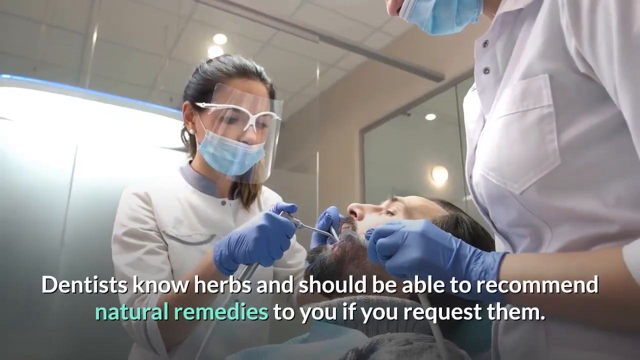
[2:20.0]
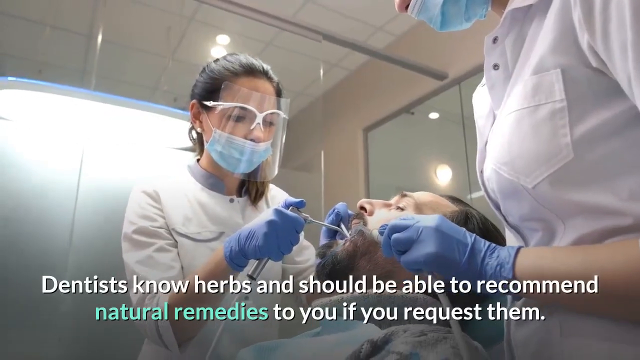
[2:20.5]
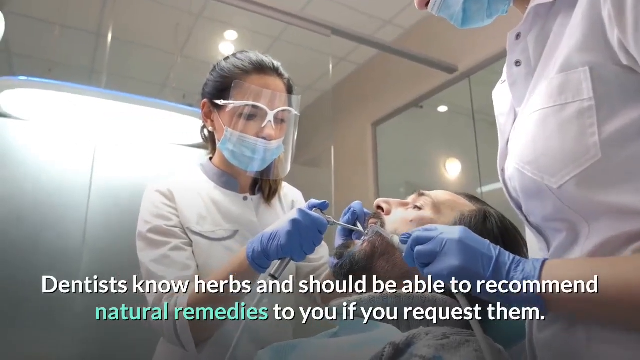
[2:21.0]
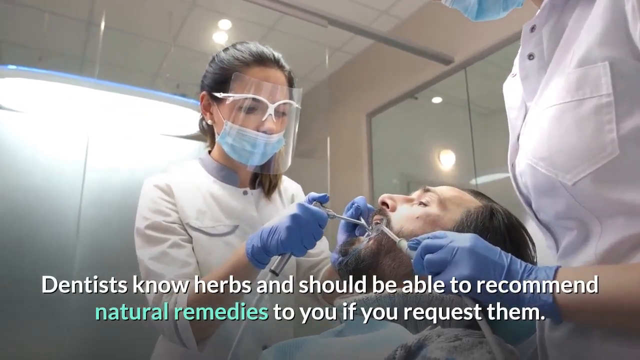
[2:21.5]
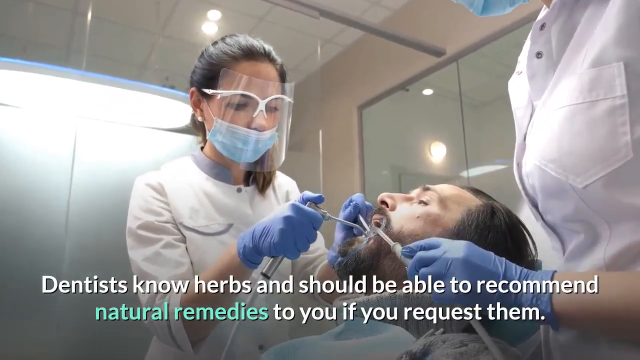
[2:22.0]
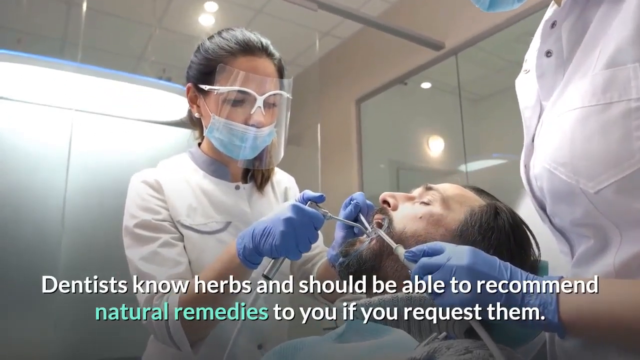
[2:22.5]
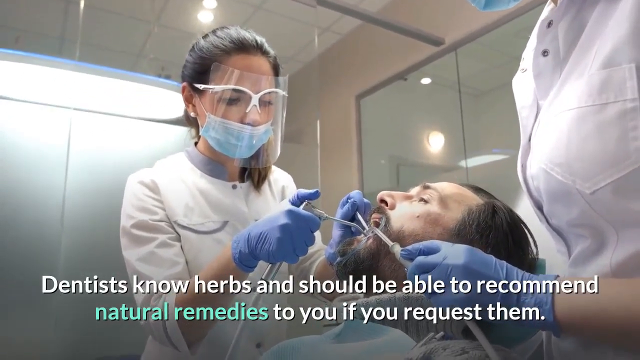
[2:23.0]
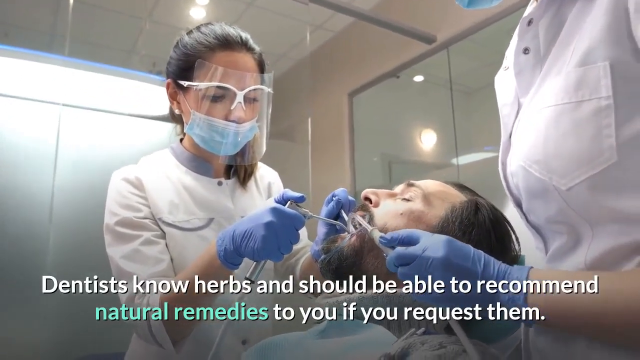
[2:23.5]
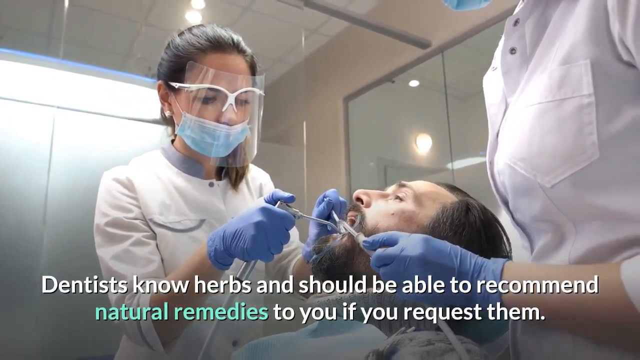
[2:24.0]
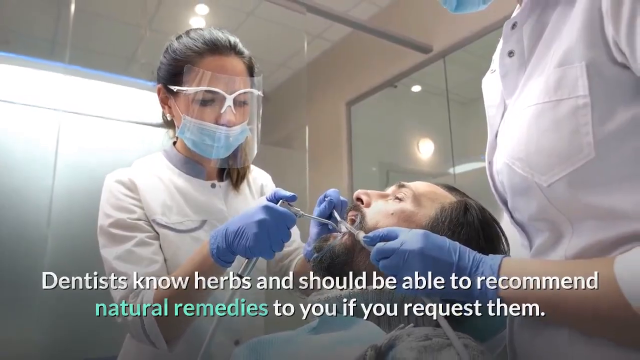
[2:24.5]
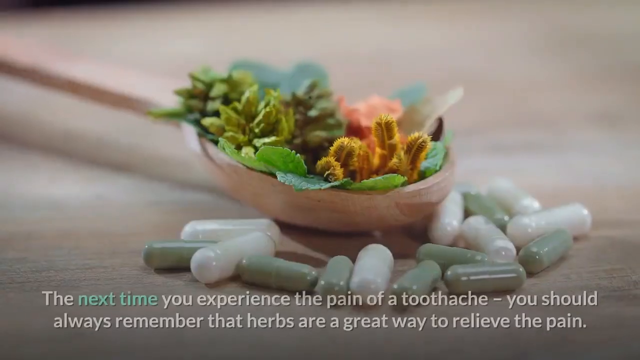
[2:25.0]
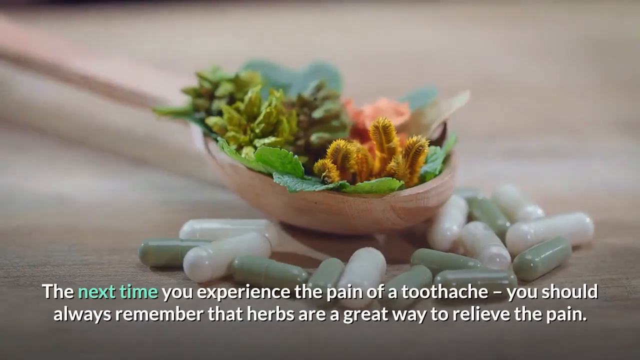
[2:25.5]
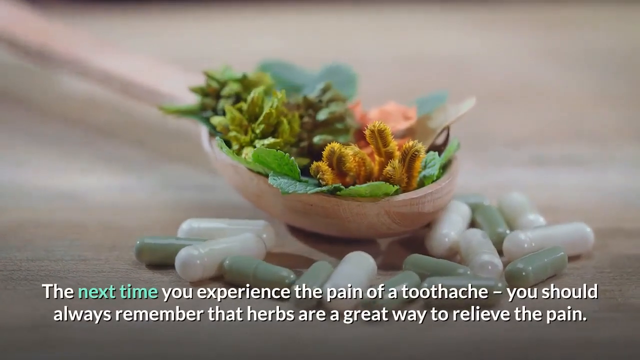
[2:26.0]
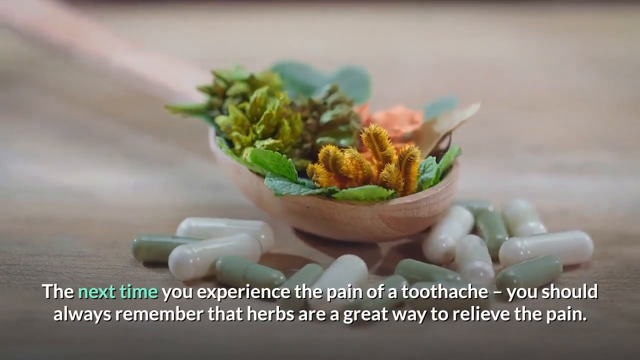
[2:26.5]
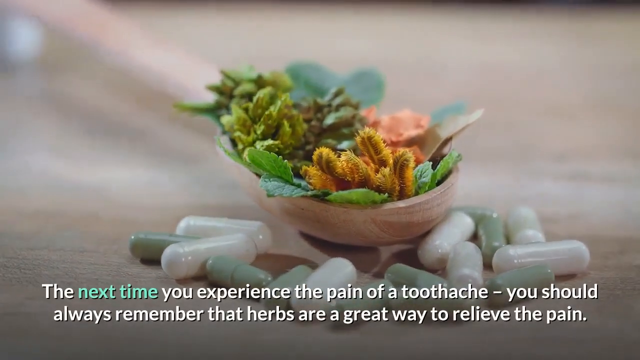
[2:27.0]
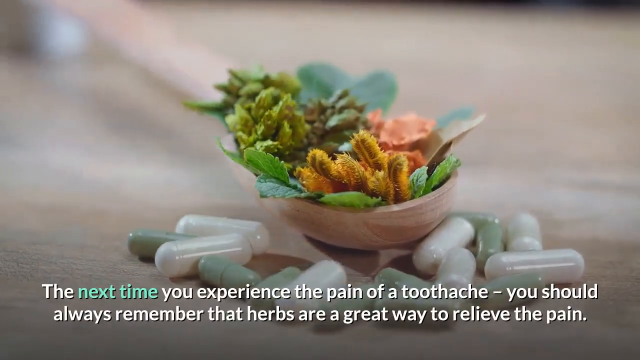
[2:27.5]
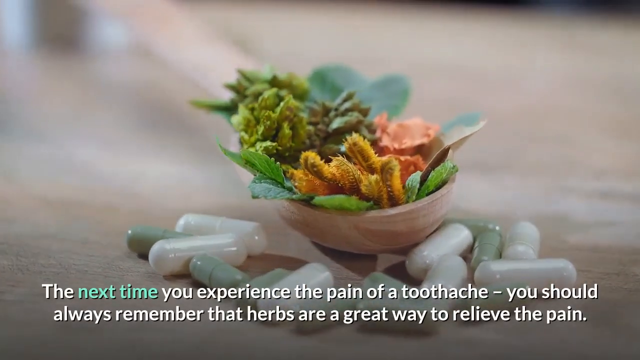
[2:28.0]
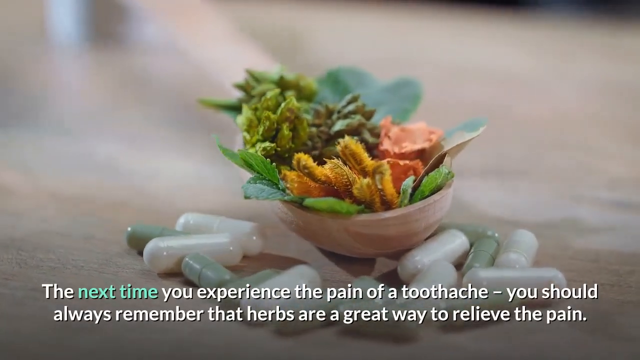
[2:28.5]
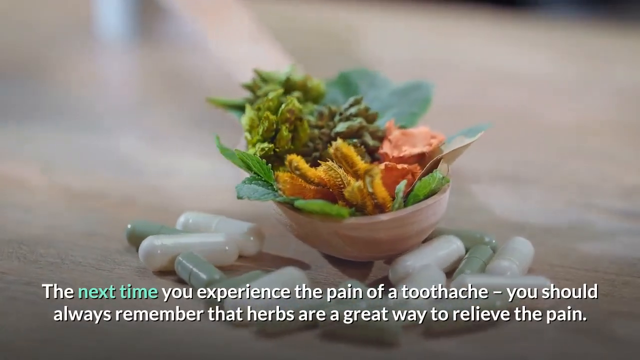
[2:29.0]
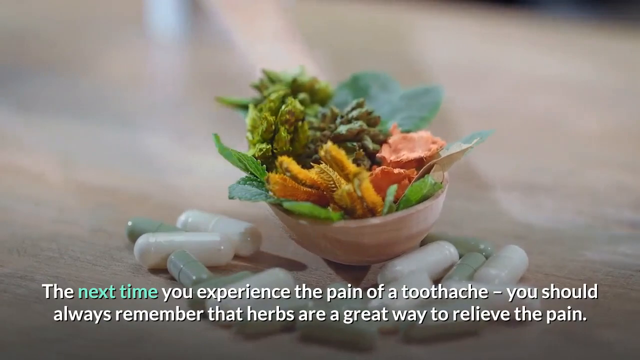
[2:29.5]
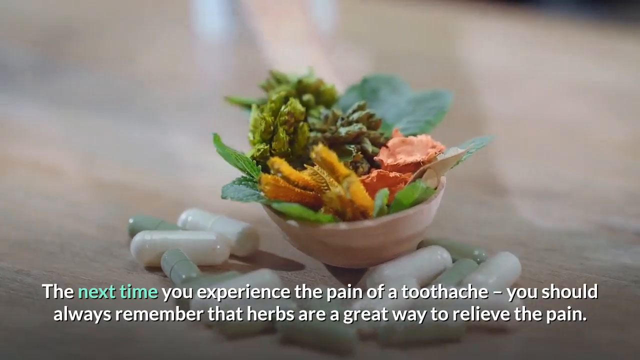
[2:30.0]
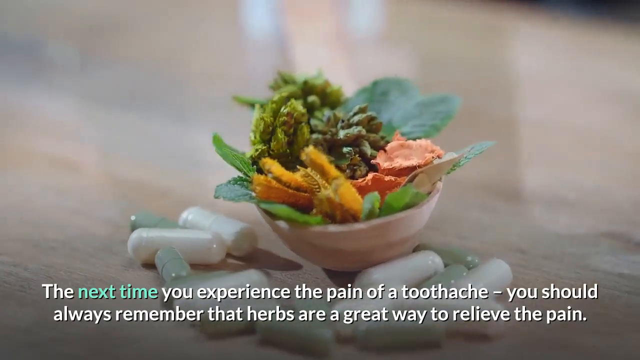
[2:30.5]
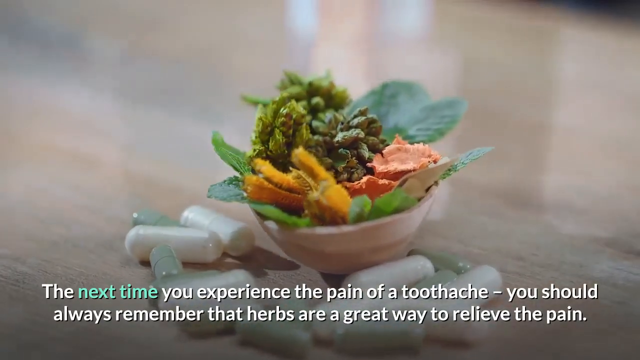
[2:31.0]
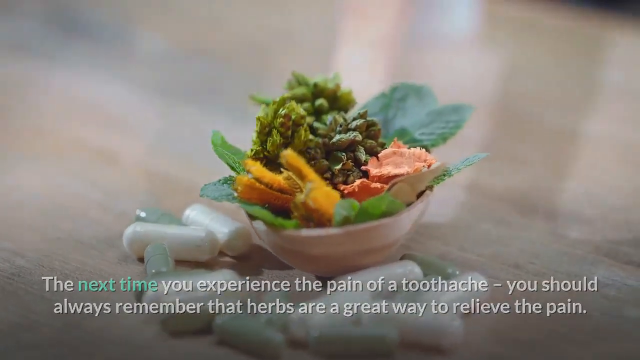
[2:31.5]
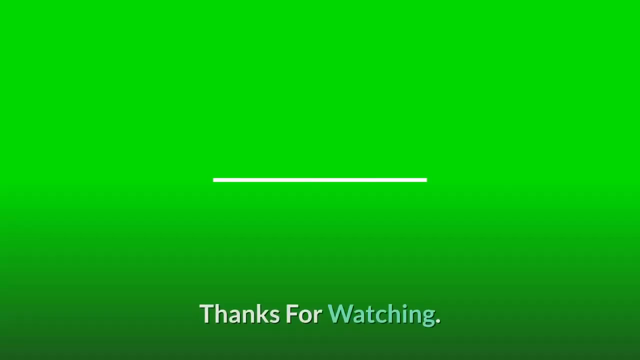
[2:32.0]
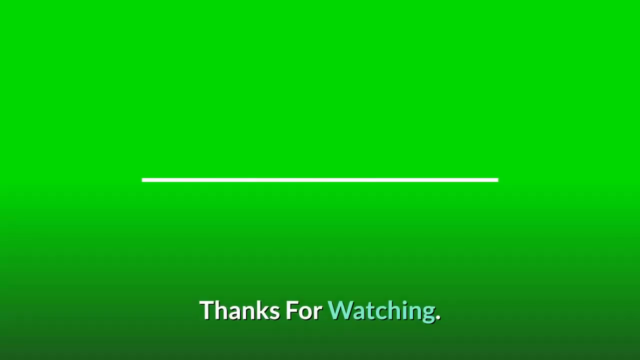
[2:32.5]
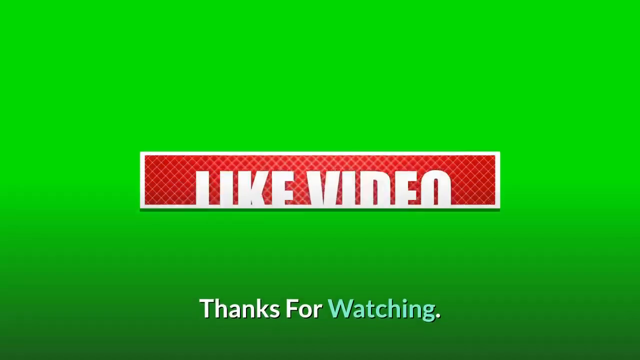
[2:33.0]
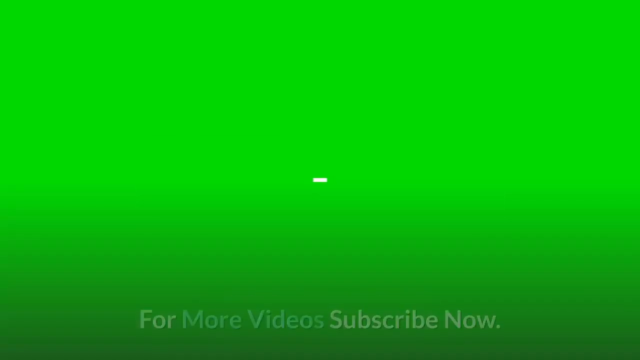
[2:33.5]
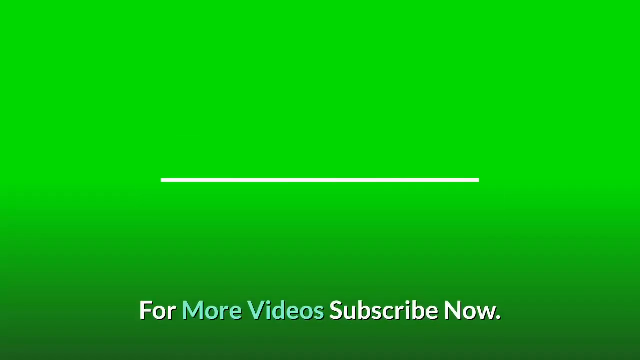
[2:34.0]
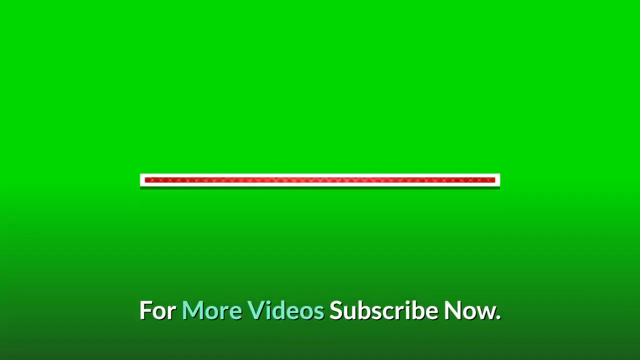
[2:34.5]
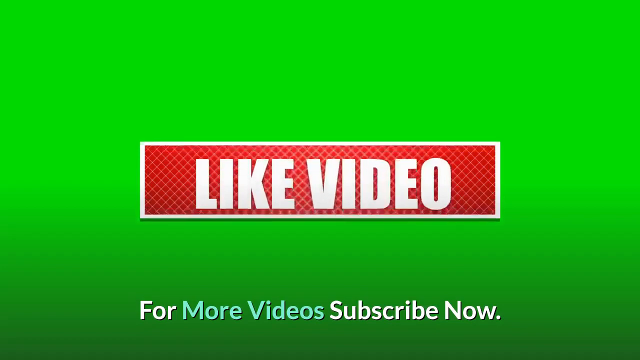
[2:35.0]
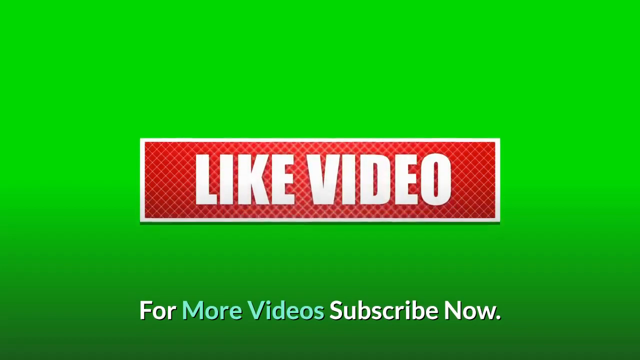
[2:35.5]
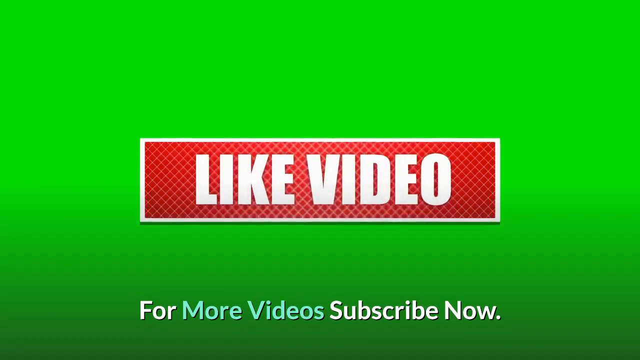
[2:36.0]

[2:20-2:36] A man with a beard, mustache and dark brown hair is laid back in a dental chair. To one side of him is a woman with a medical shield, safety glasses and a medical mask; her dark brown hair is pulled back in a ponytail, and she wears a medical jacket and blue gloves, with tools in each hand inside the man's mouth. On the man's other side is another assistant in a white medical shirt and a blue medical mask, whose face and head are not visible; she wears blue gloves, and only her left hand is seen, holding the sucking device toward the left corner of the man's mouth. The text at the bottom ends "and should be able to recommend natural remedies to you if you request them." The doctor or dentist squirts water into the patient's mouth, and the scene changes to a wooden spoon on a wooden surface filled with a variety of tiny plants: a yellow plant, a pink plant, and the rest in different shades of green. White capsules and green capsules are scattered around the spoon. The text reads "the next time you experience the pain of a toothache you should always remember that herbs are a great way to relieve the pain." The view spins clockwise around the spoon, and then a solid green background shows the text "thank you for viewing."